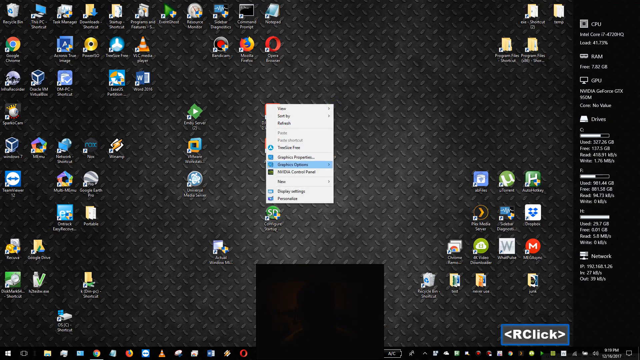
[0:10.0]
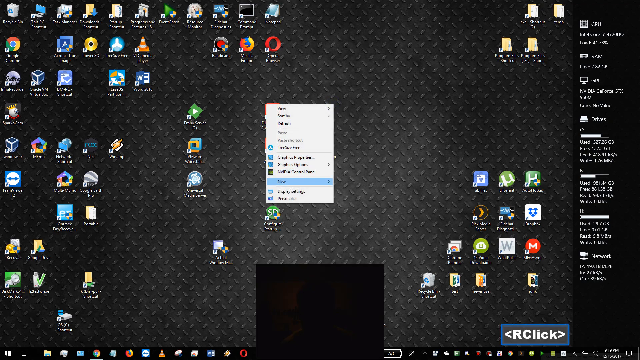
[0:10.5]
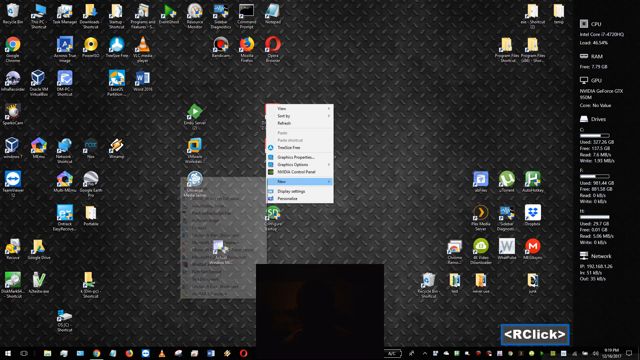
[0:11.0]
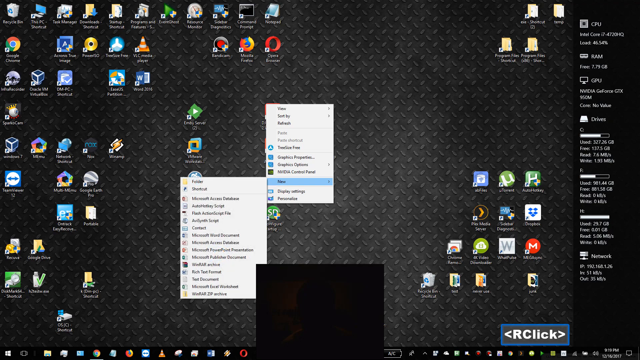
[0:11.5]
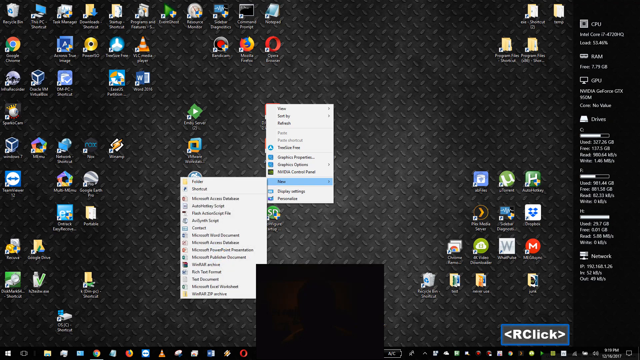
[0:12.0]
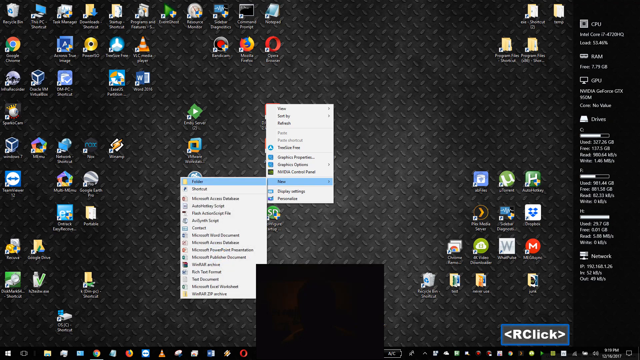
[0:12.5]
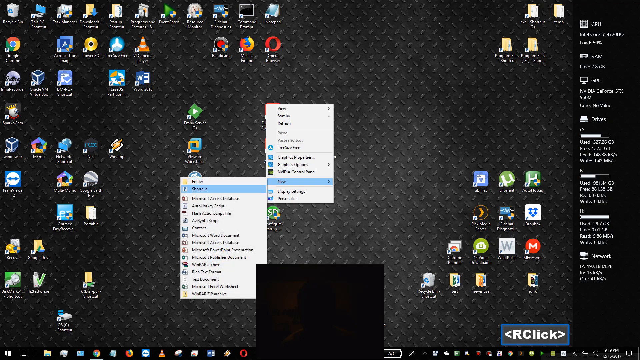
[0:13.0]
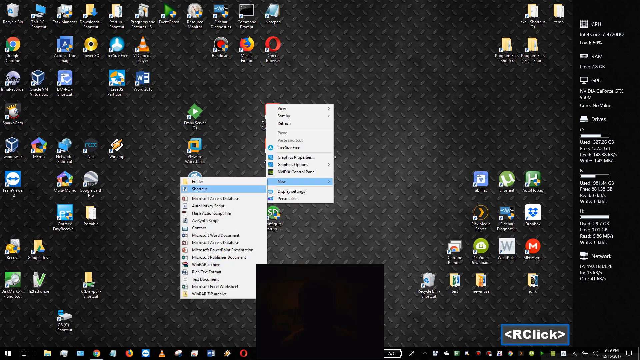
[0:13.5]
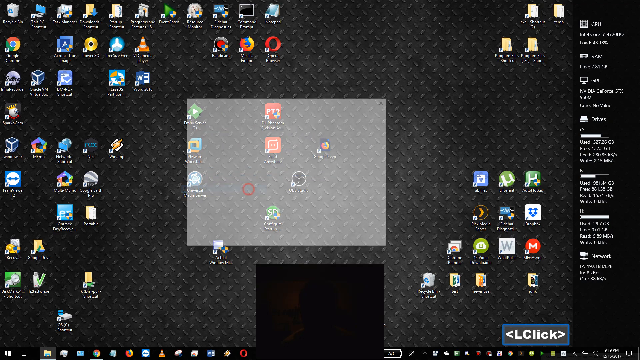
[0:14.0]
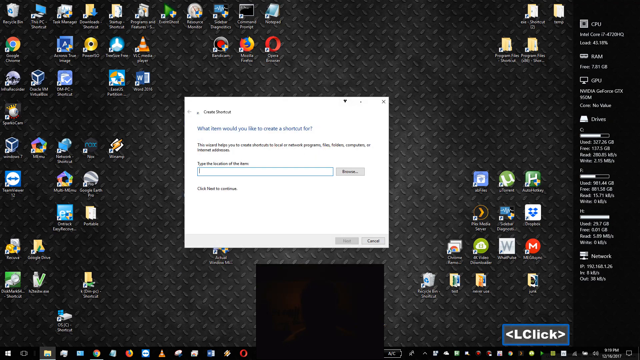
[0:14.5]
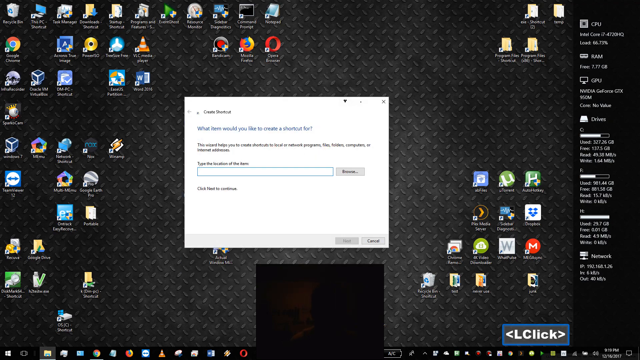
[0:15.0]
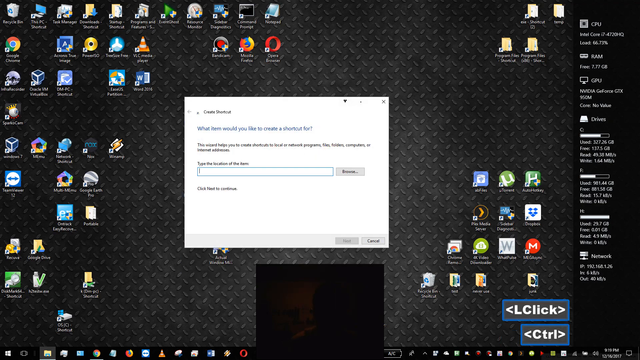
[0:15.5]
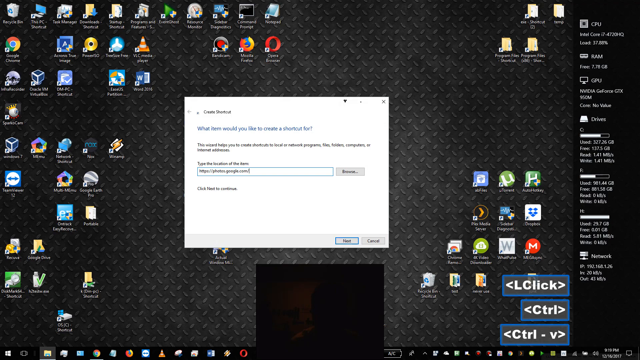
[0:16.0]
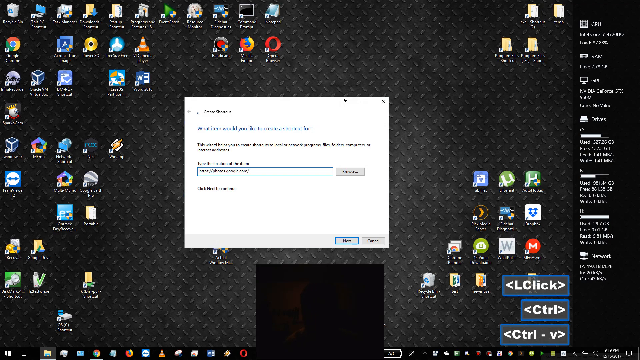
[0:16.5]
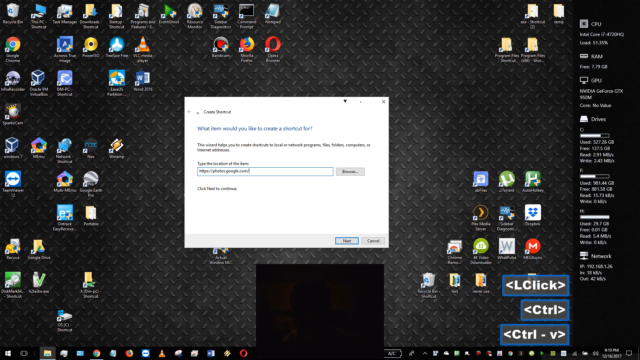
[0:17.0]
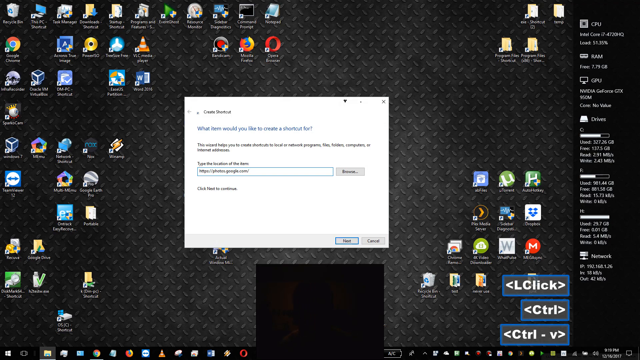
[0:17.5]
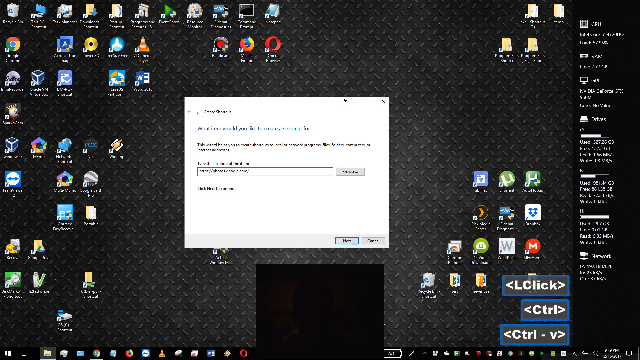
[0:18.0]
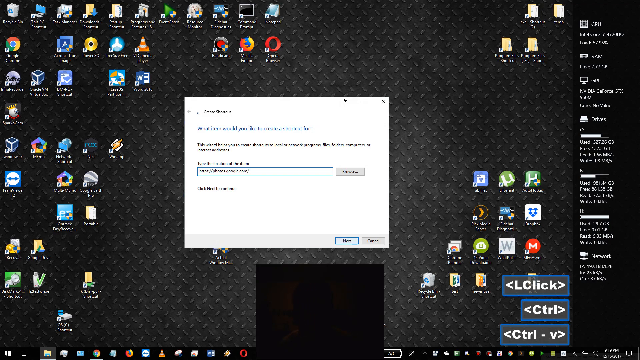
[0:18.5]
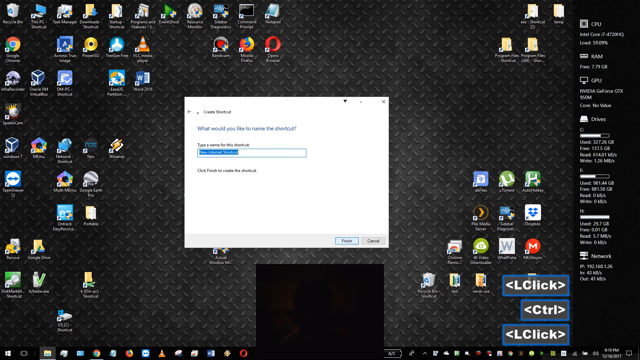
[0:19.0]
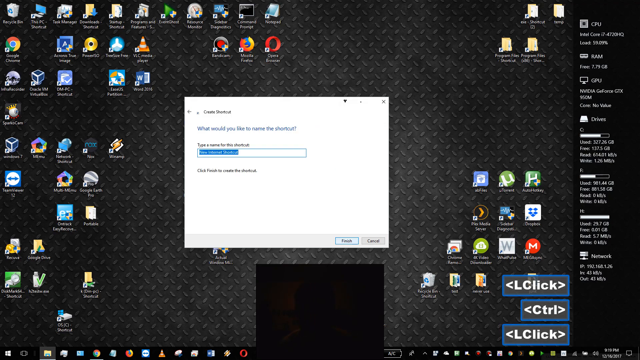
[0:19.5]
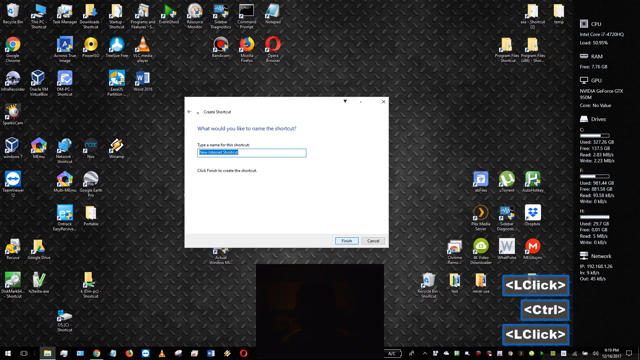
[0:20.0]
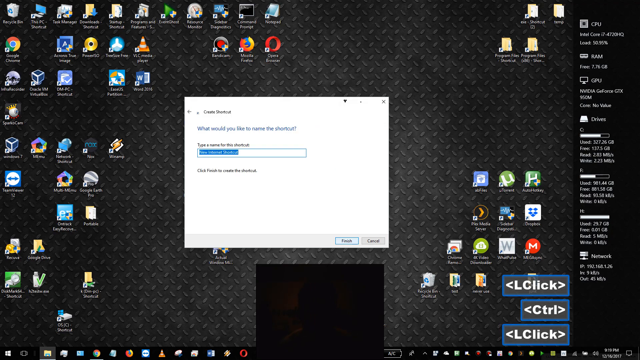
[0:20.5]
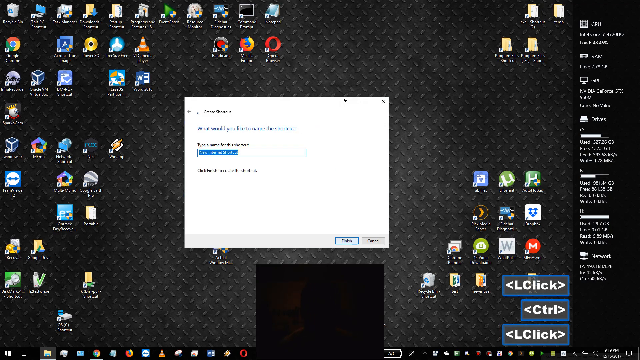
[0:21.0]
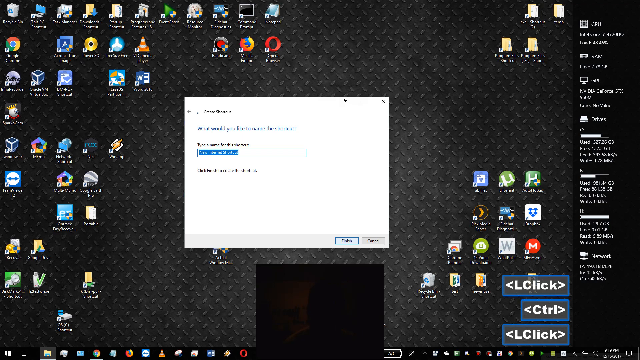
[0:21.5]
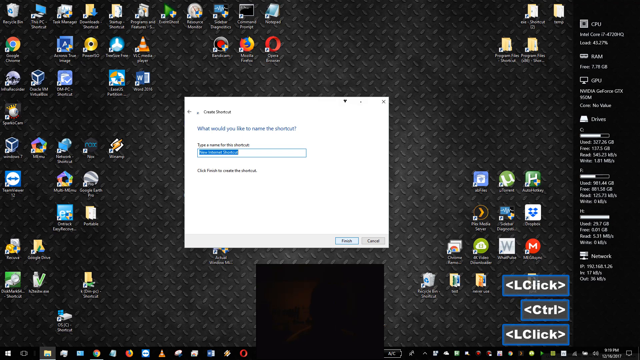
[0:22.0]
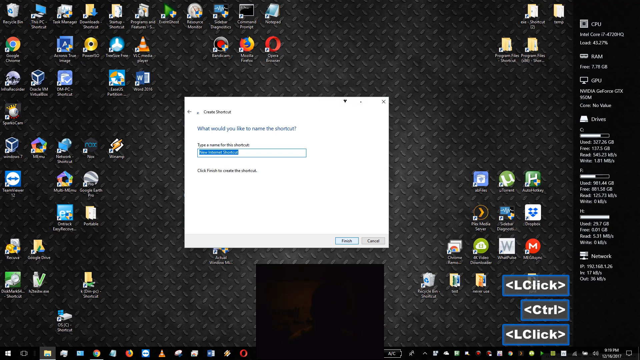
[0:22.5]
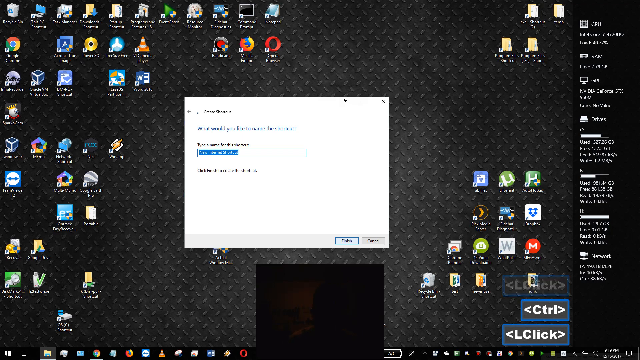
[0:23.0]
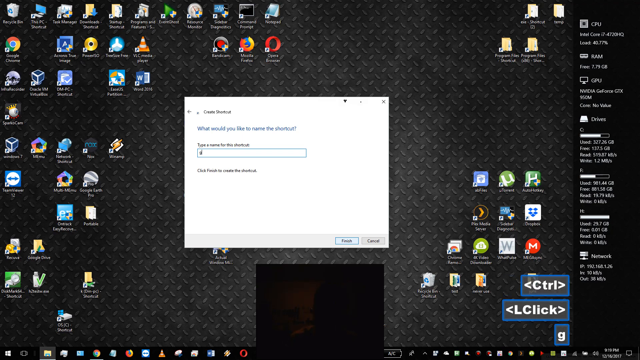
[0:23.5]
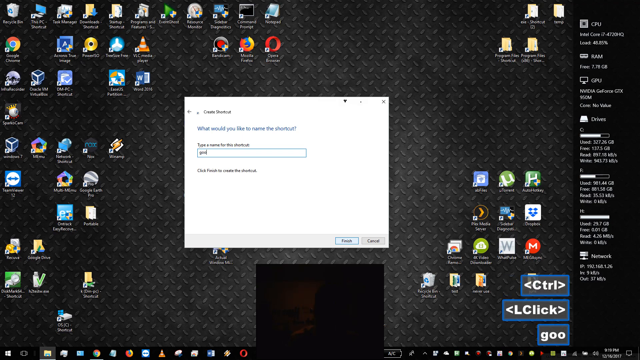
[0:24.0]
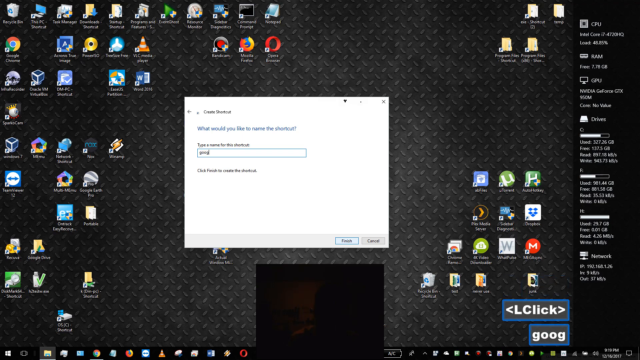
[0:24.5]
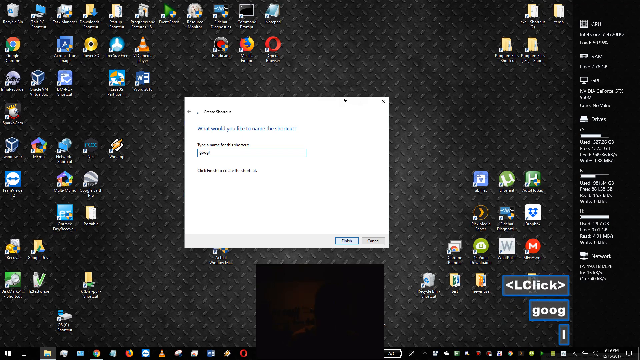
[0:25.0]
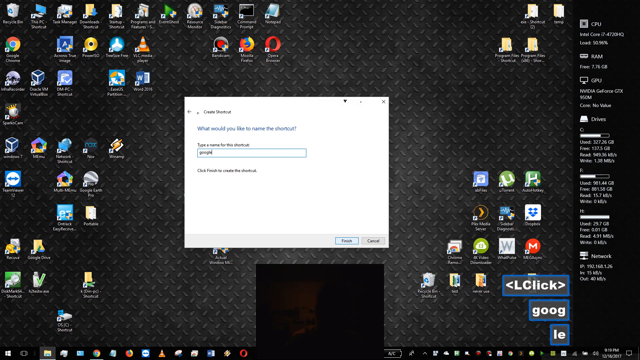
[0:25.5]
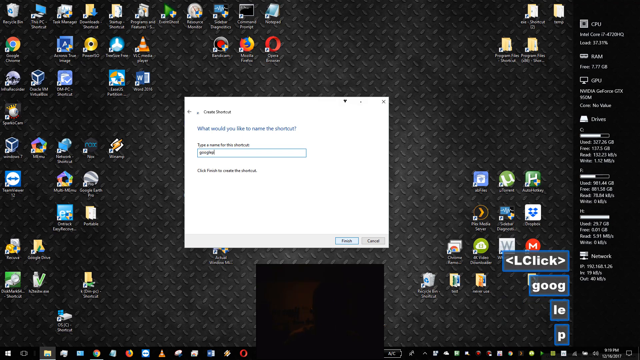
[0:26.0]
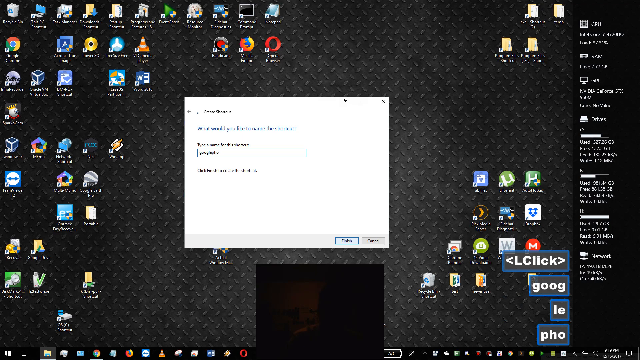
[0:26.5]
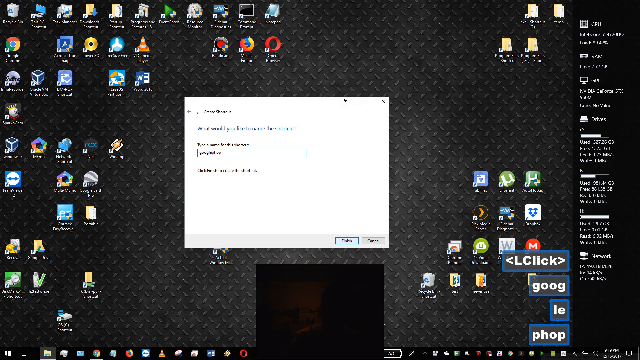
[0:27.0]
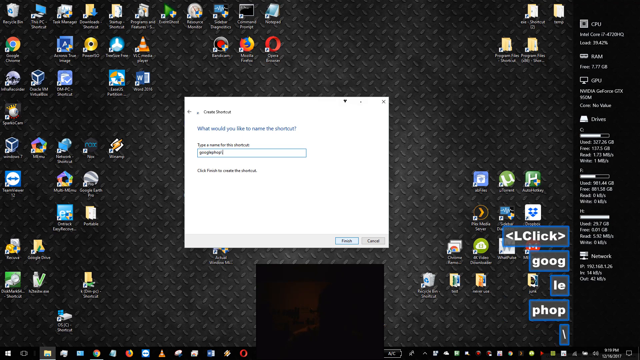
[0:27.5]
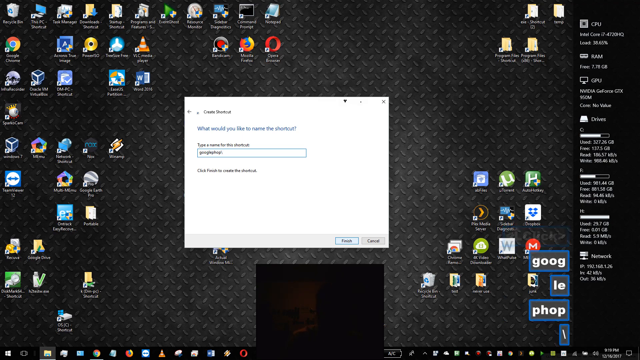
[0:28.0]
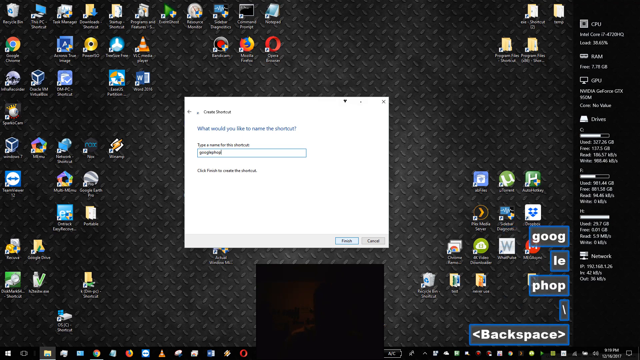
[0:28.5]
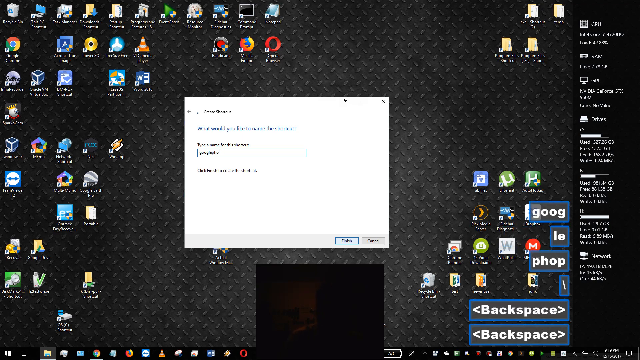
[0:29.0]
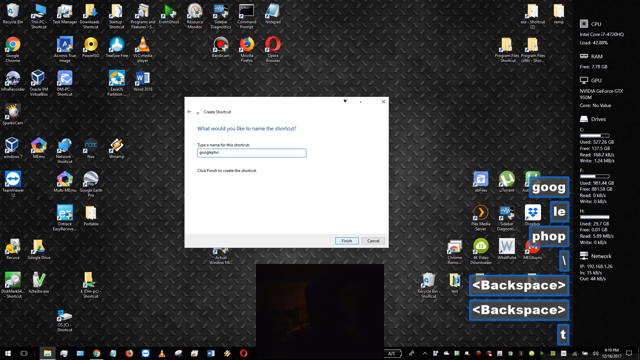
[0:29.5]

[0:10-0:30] The right-click menu continues on the black desktop with what looks like tire tread in the background and a lot of icons surrounding the middle. The selected option, a little blurry, says "New," and the next option selected is "Shortcut." What looks like the Create Shortcut screen appears, also a little blurry, and it looks to be a shortcut for Google, with "PHOP" for the remainder of the text on the shortcut. Each small window pops up in the very middle of the desktop, where the new shortcut is being created. While the shortcut is typed in, text pops up in the bottom right reading "Control, L-Click, Google, PHOP, Backspace."